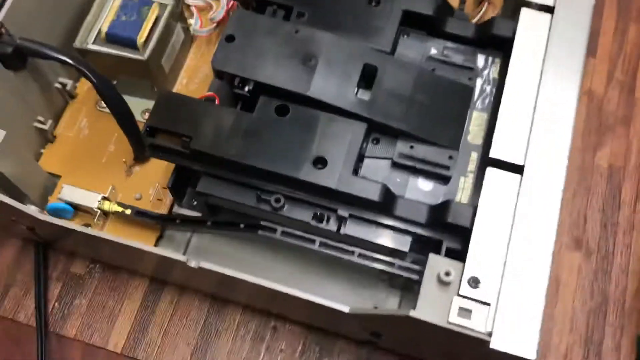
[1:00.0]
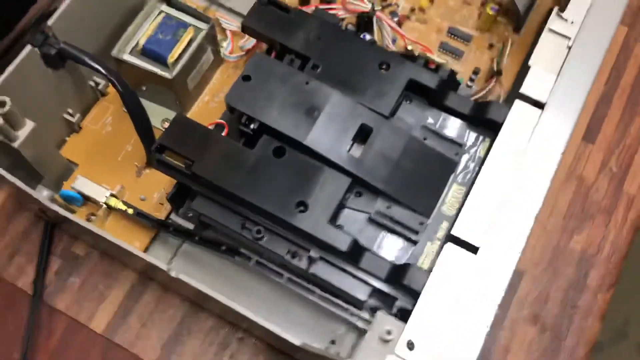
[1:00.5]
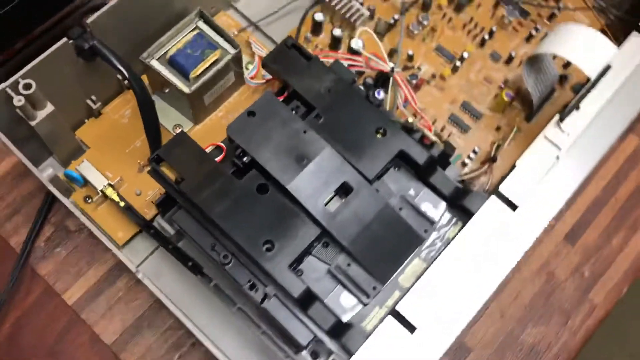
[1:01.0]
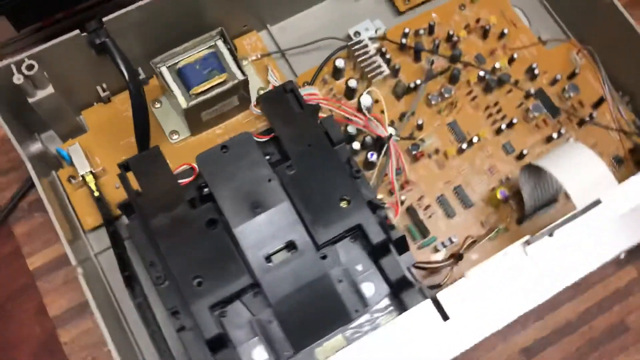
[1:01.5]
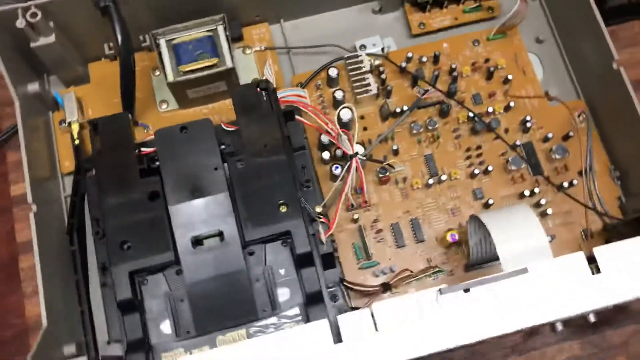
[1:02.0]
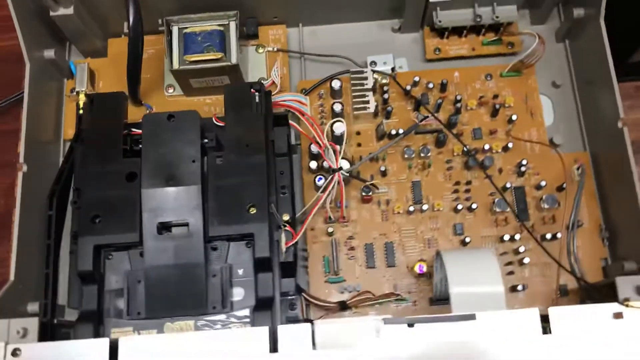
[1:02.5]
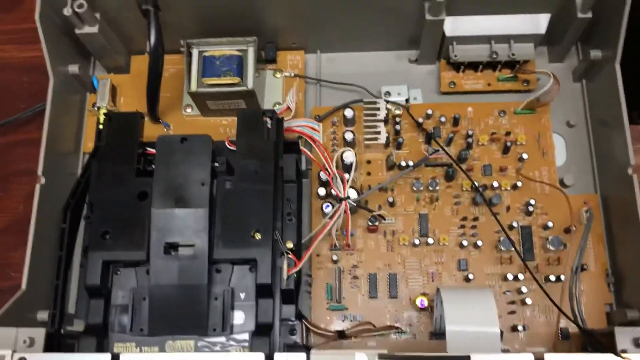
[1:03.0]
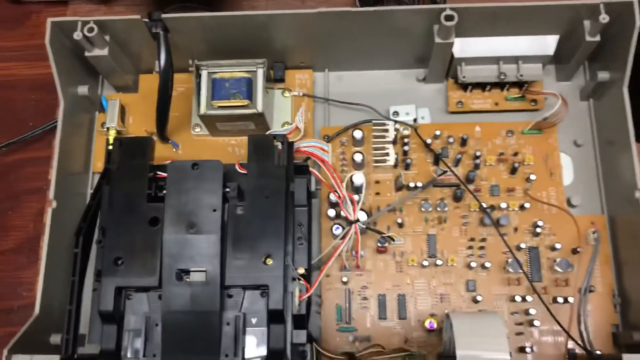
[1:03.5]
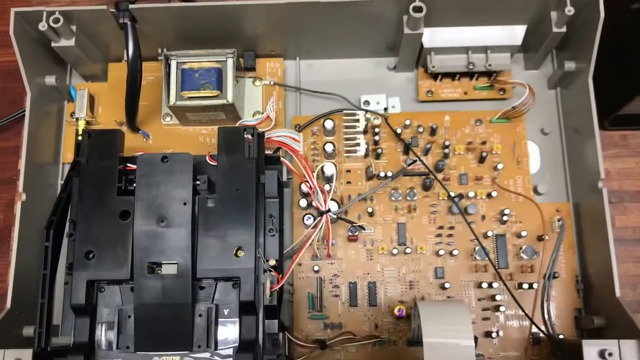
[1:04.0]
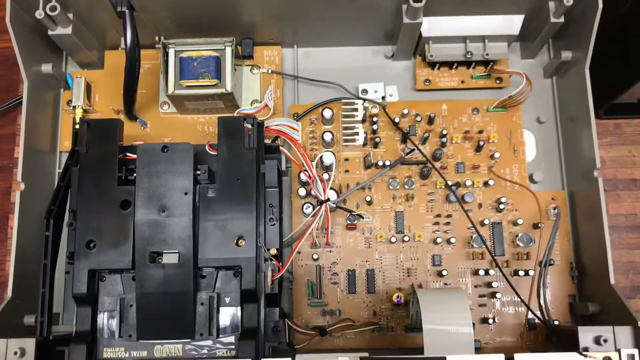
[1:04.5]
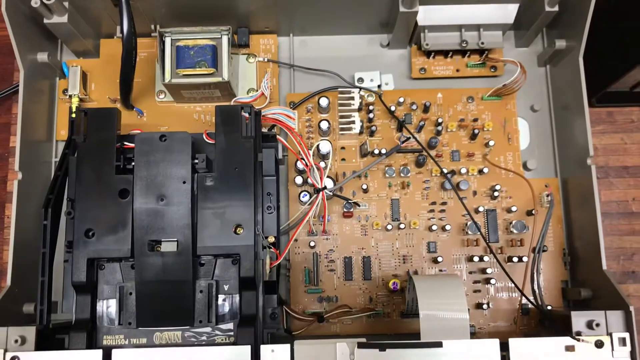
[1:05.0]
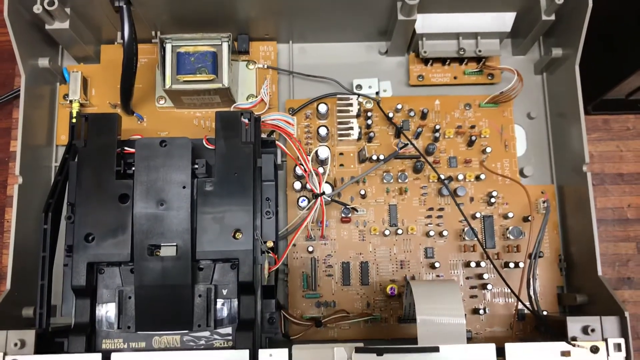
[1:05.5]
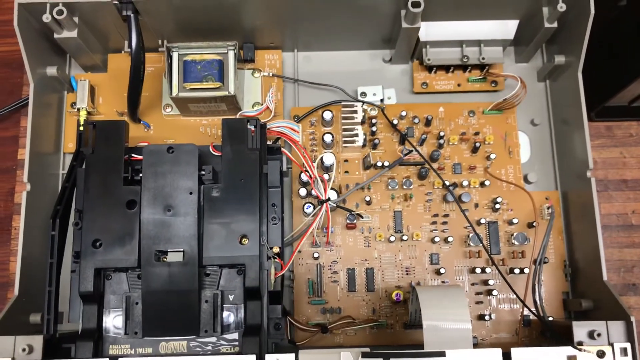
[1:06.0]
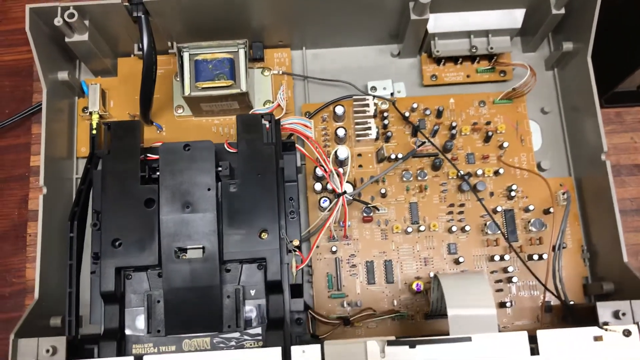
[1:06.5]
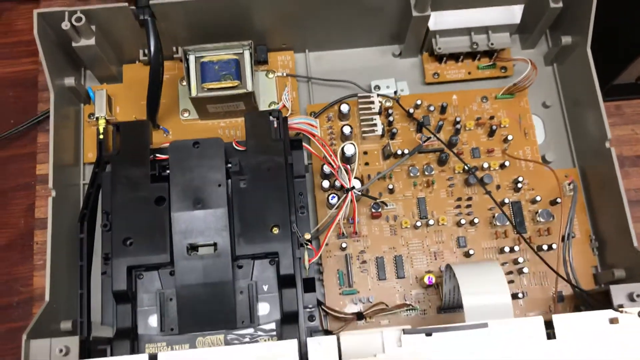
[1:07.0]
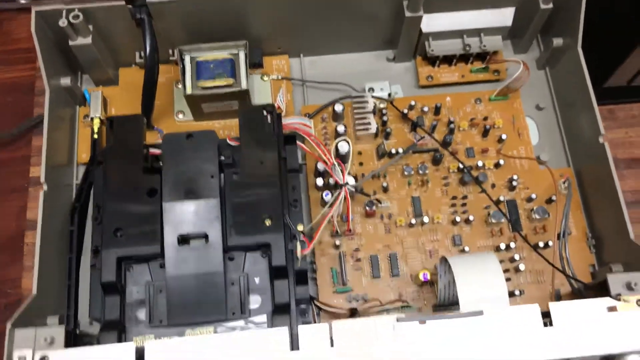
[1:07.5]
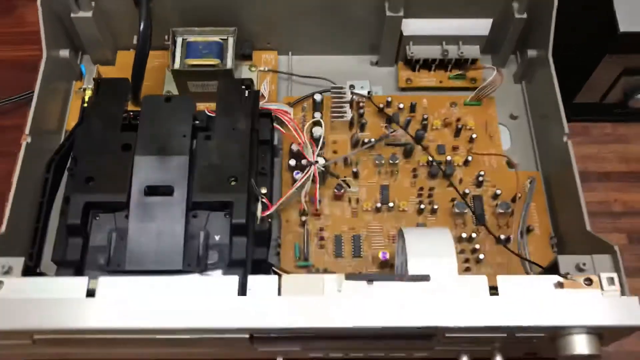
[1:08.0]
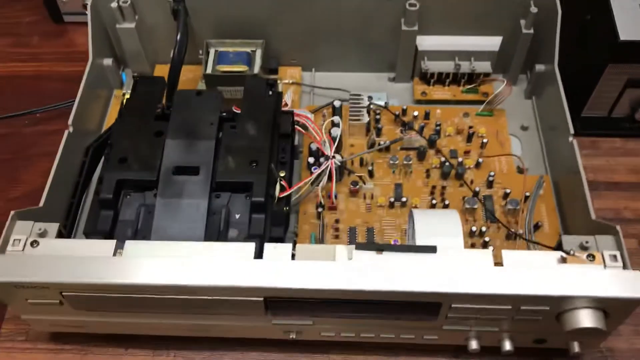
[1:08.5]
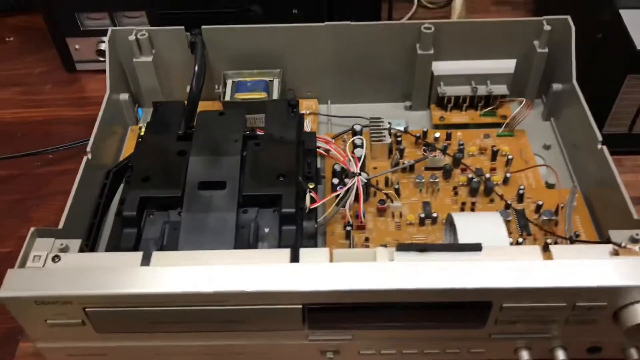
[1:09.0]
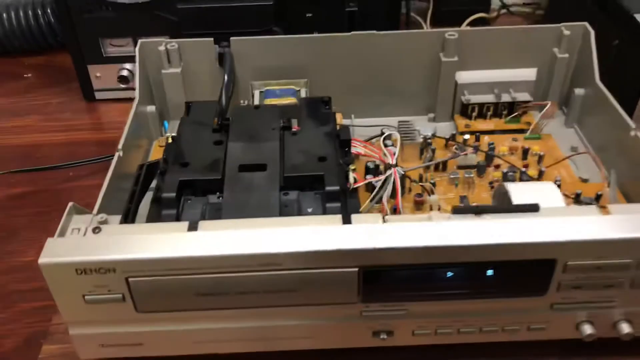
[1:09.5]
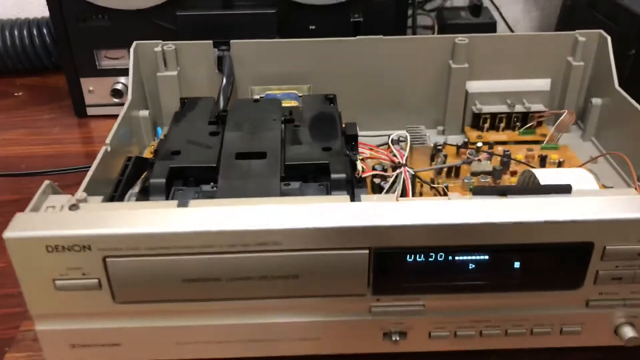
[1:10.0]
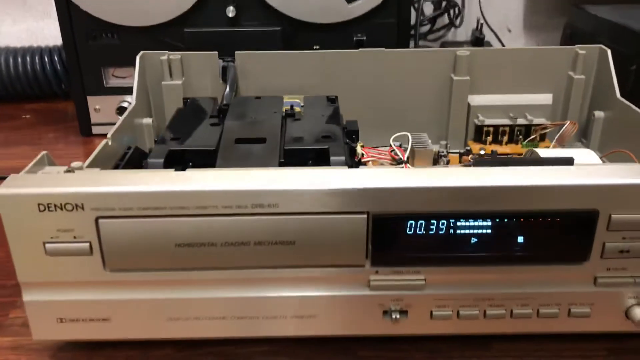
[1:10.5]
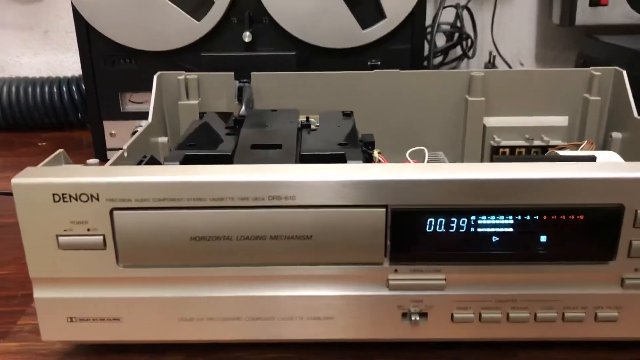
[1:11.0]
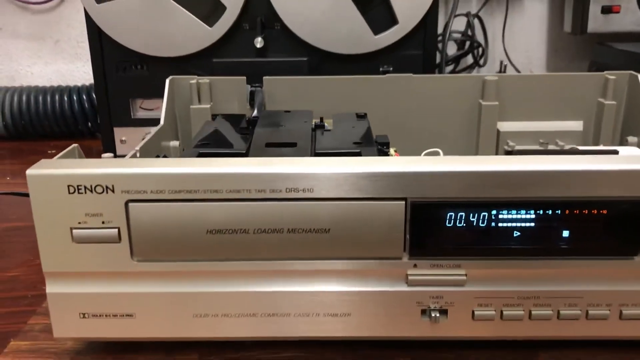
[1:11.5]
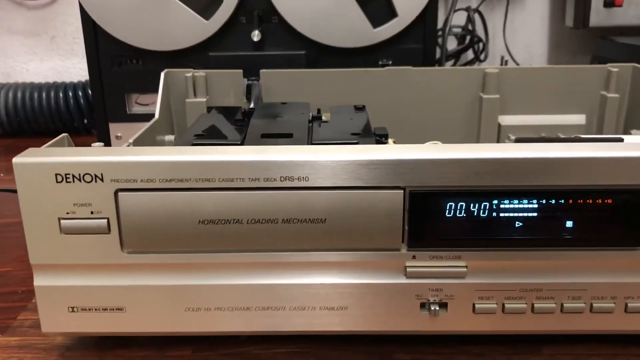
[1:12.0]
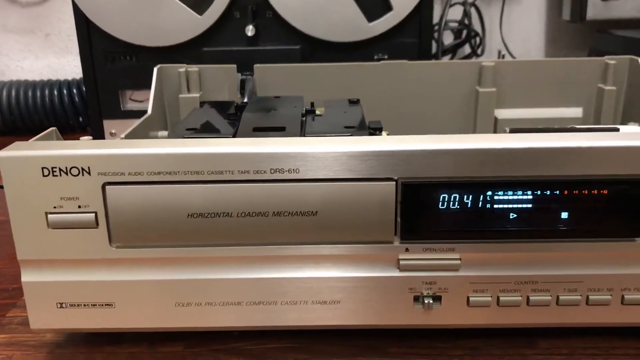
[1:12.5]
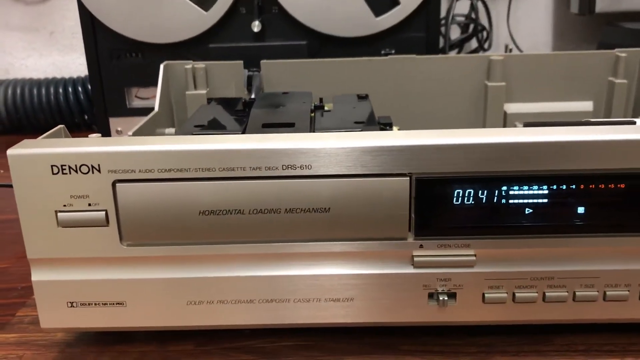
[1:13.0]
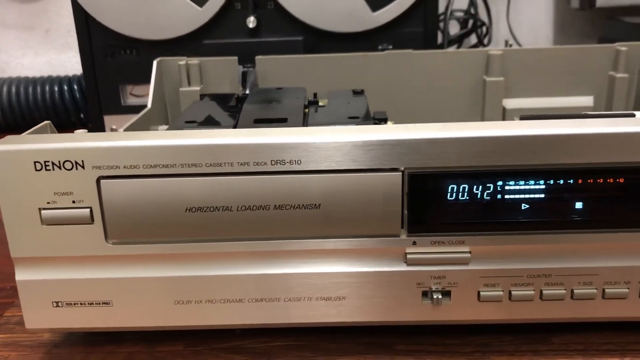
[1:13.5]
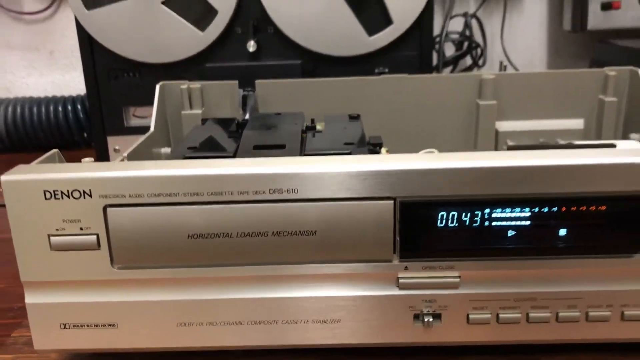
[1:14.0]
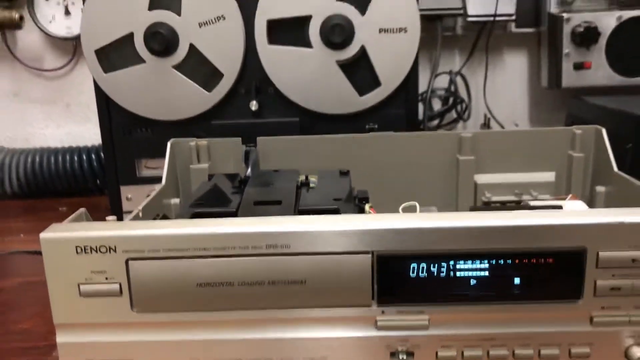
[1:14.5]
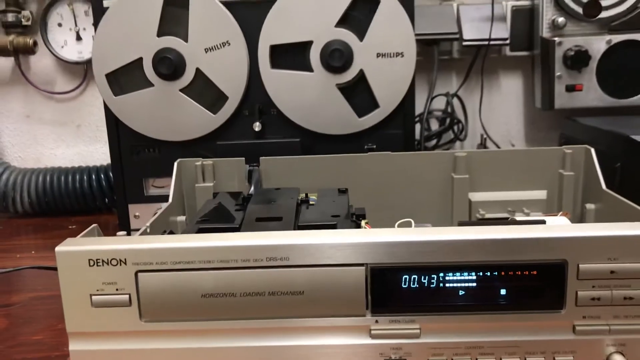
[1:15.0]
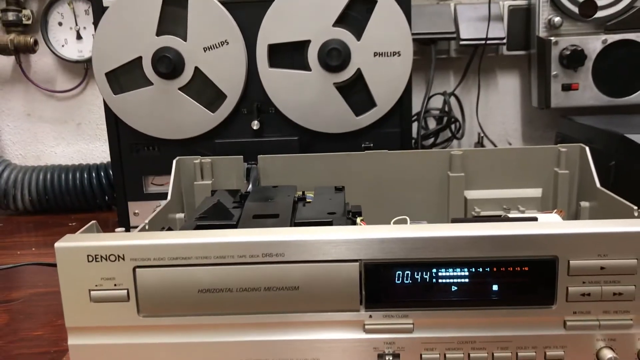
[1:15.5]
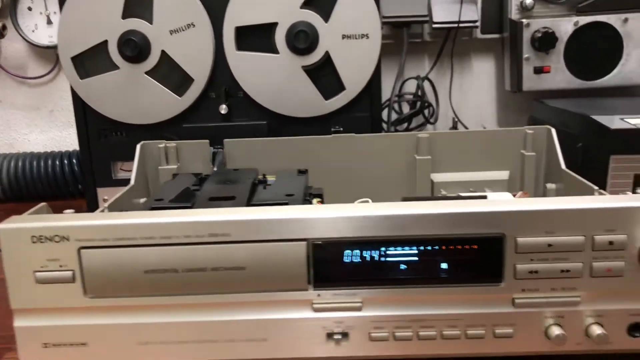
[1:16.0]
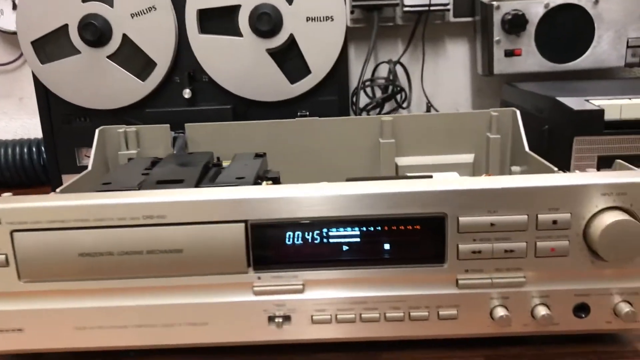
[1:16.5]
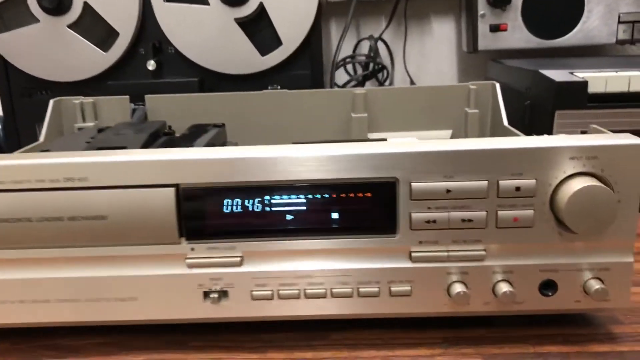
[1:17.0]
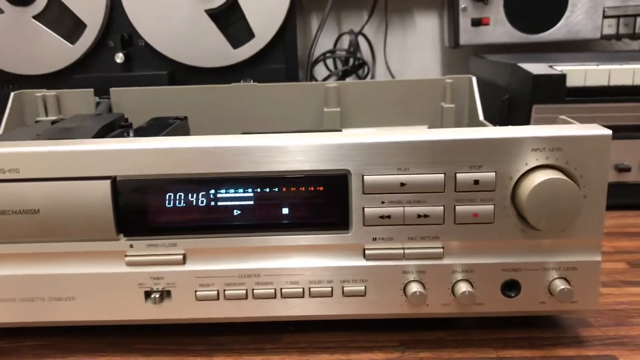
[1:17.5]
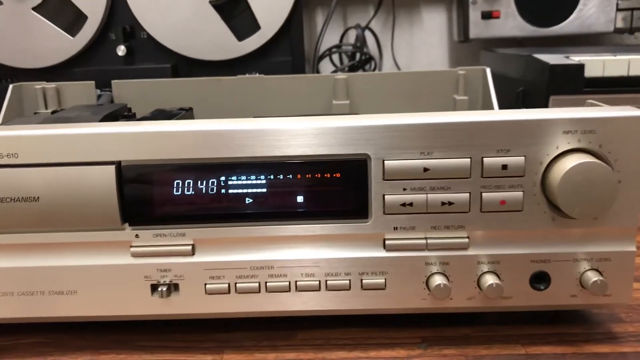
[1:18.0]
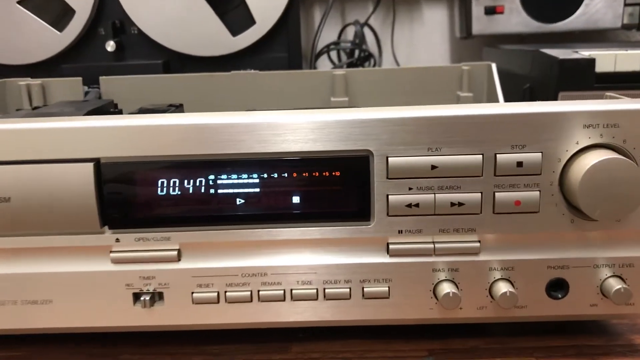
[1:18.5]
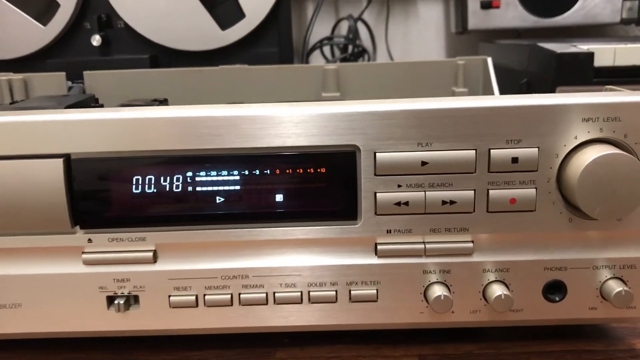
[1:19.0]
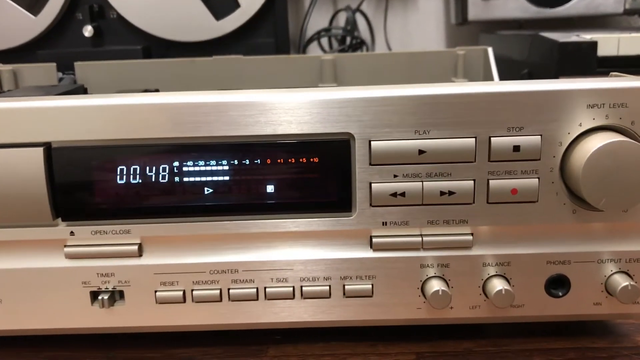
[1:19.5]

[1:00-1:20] A view of the audio recording machines opens the shot, showing the fronts of the machines. The camera then goes to the front of the machines, where the knobs and buttons a user would operate are visible. A display shows a number in the 40s, apparently meaning the tape in the machine is running.